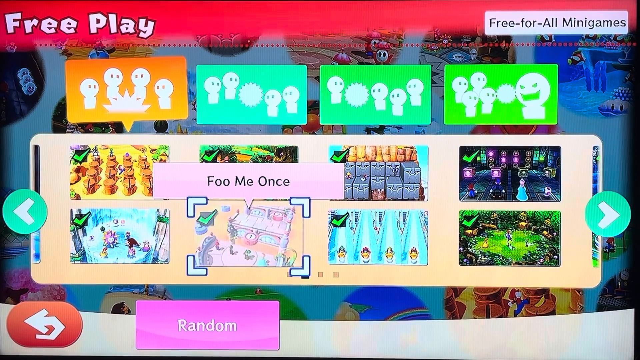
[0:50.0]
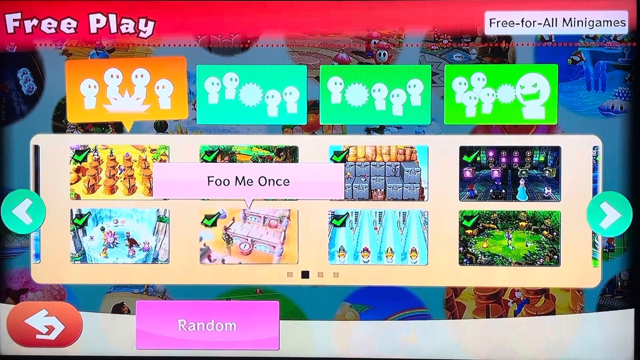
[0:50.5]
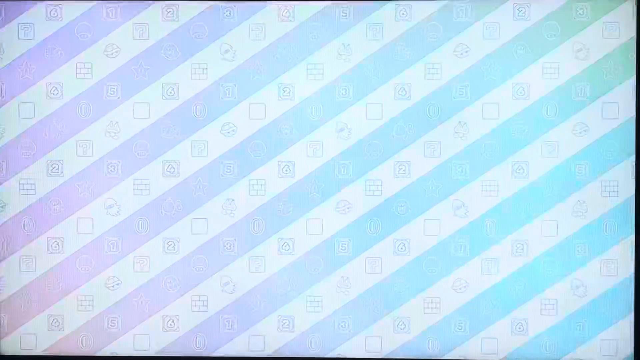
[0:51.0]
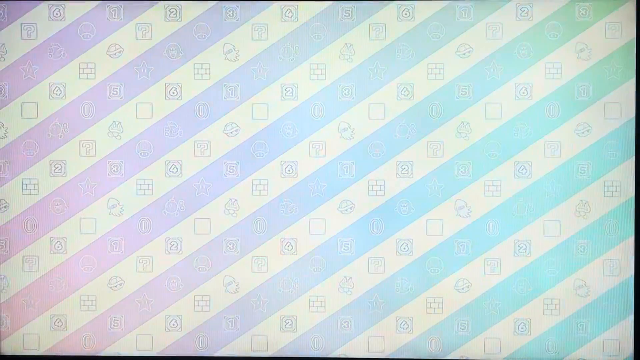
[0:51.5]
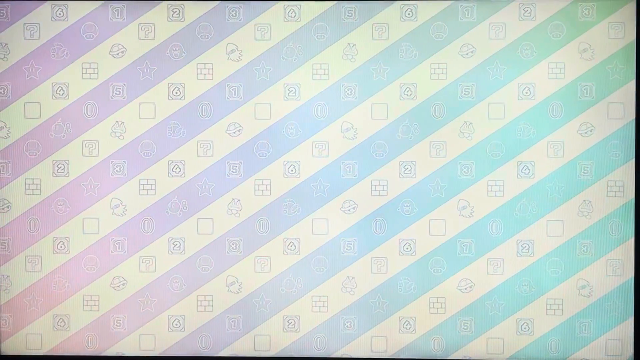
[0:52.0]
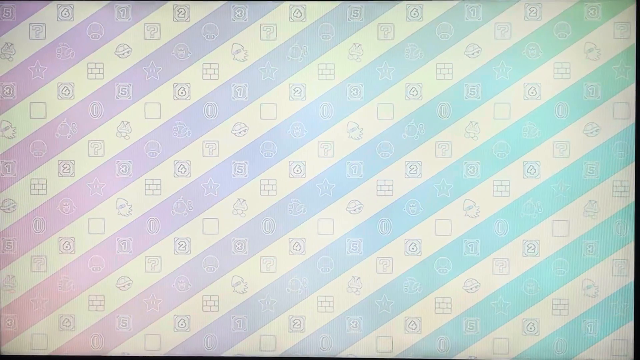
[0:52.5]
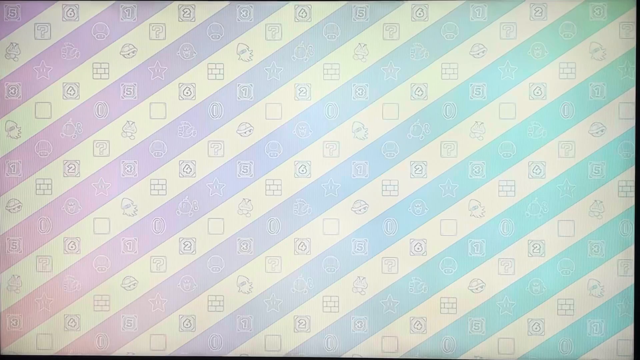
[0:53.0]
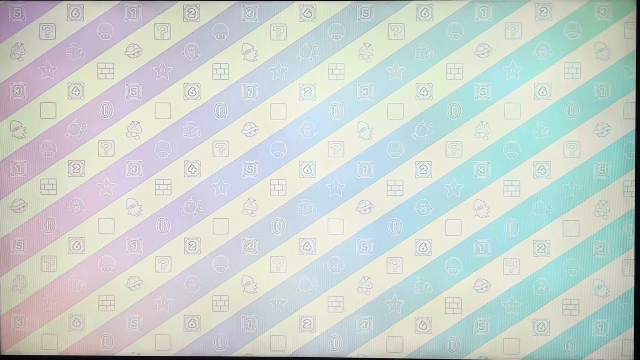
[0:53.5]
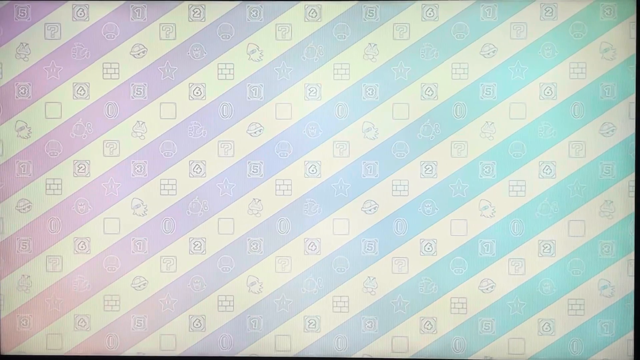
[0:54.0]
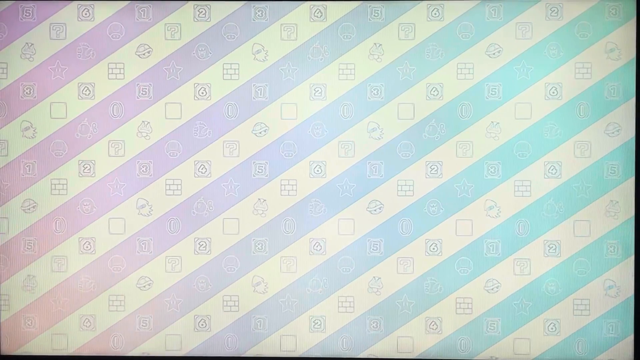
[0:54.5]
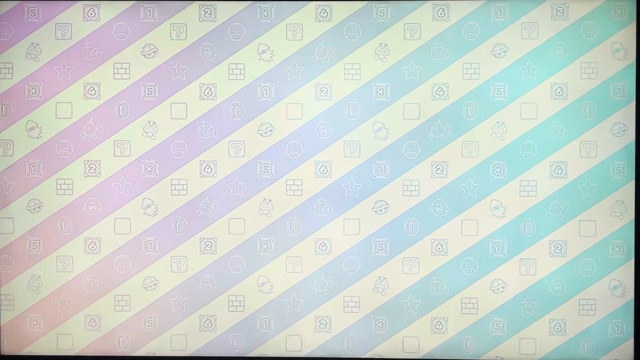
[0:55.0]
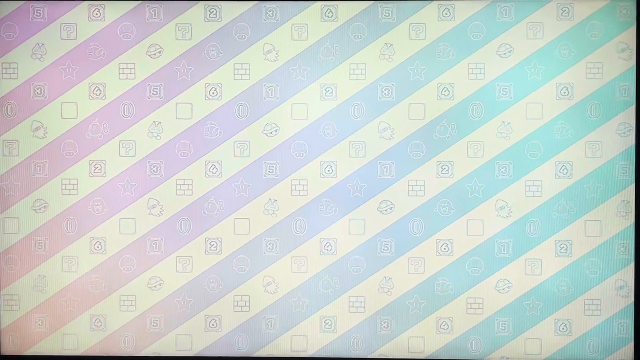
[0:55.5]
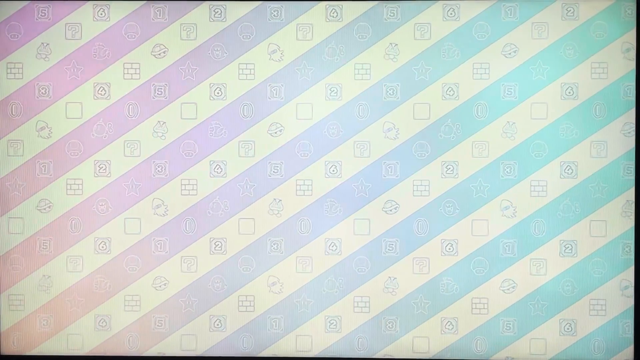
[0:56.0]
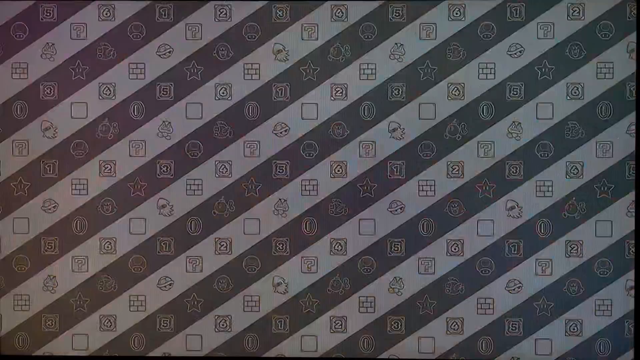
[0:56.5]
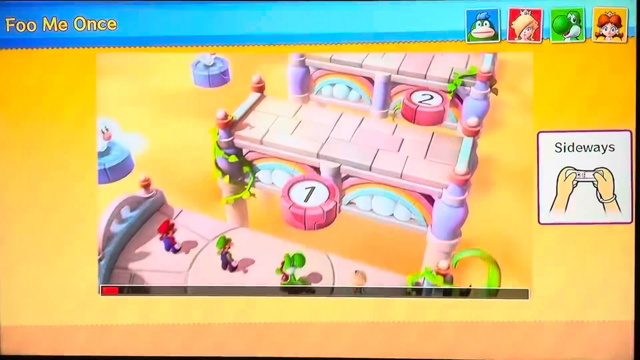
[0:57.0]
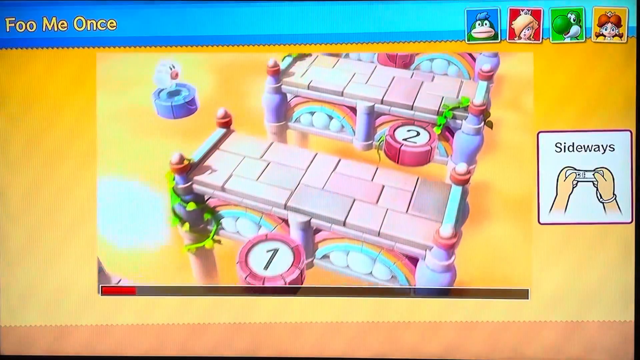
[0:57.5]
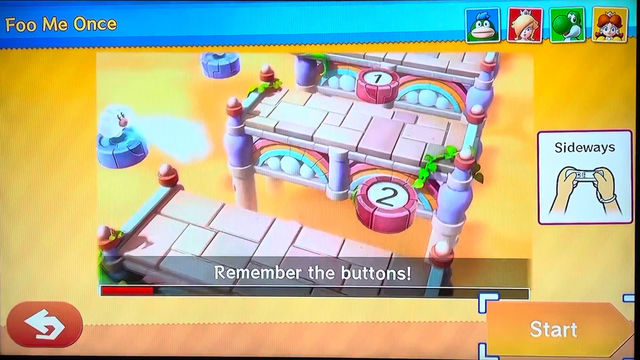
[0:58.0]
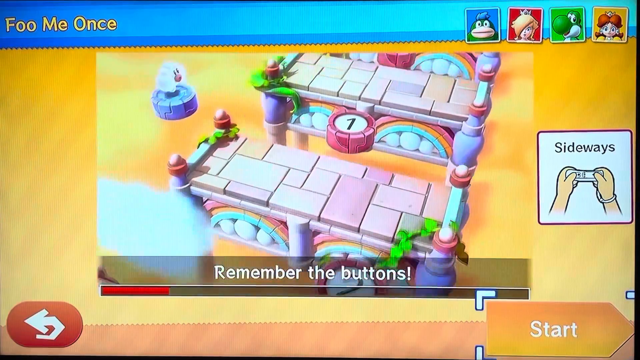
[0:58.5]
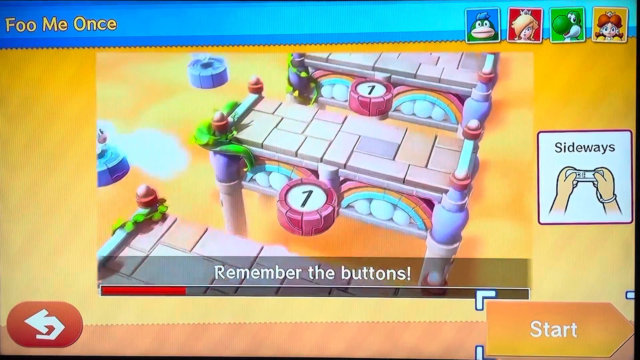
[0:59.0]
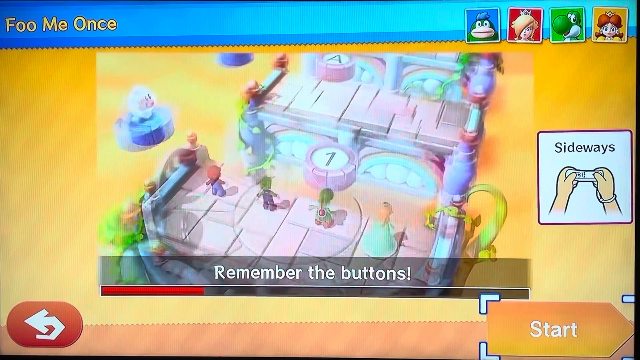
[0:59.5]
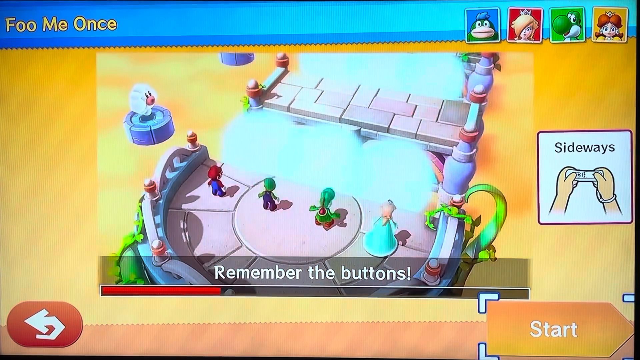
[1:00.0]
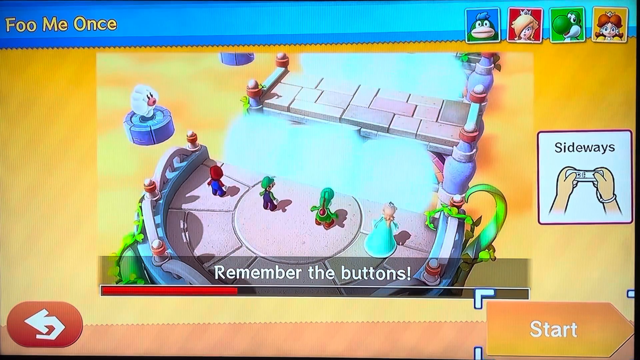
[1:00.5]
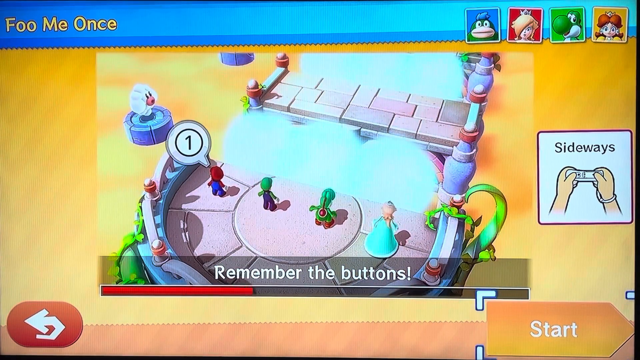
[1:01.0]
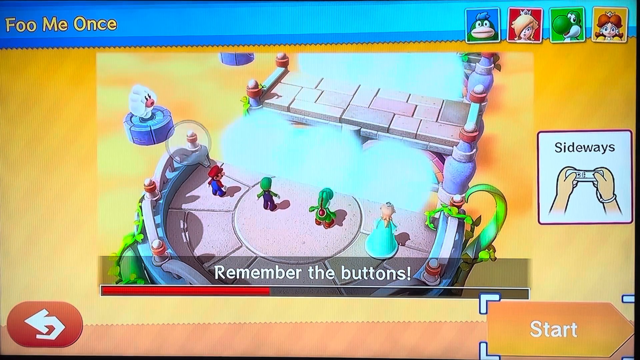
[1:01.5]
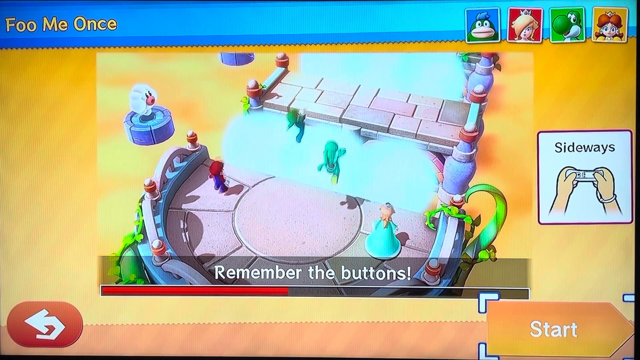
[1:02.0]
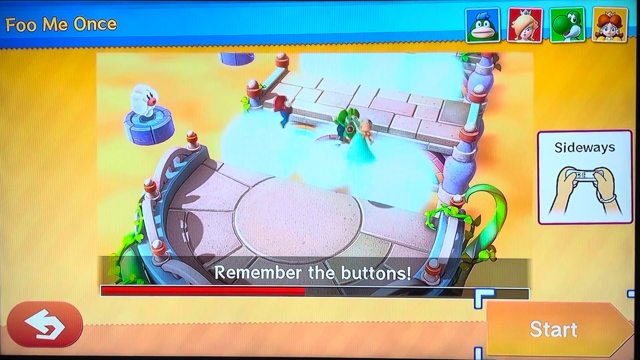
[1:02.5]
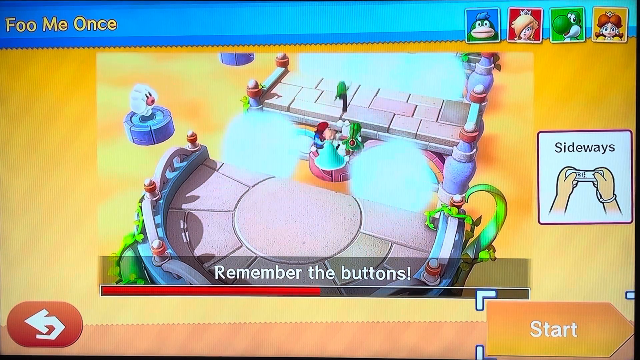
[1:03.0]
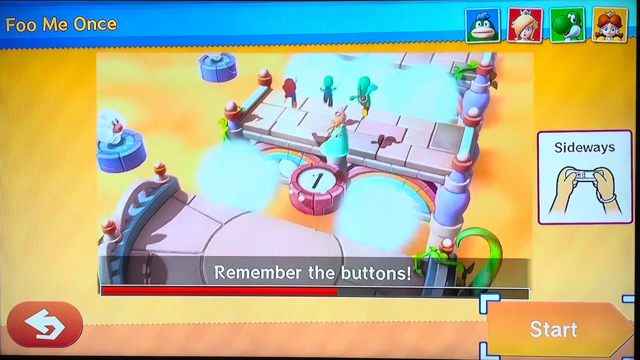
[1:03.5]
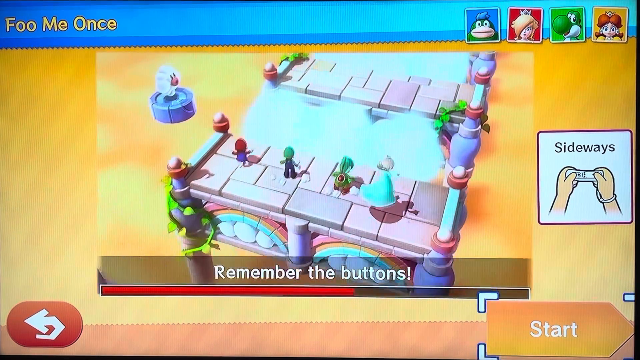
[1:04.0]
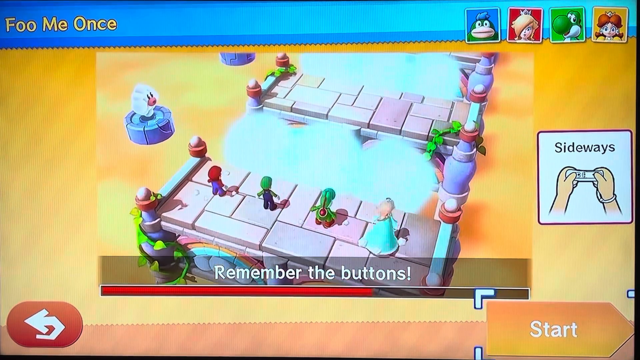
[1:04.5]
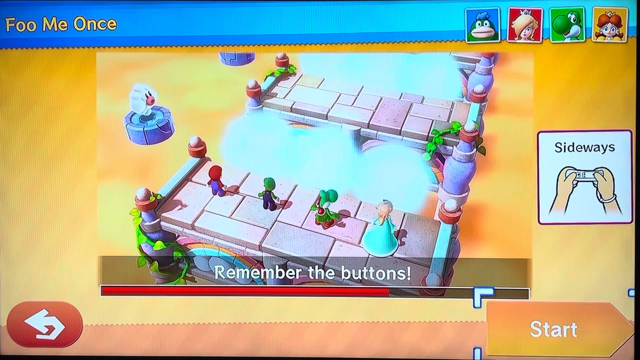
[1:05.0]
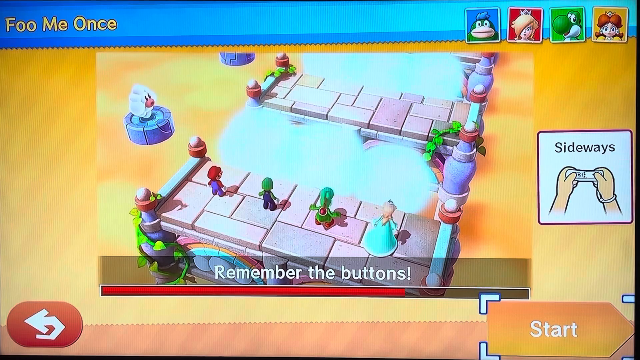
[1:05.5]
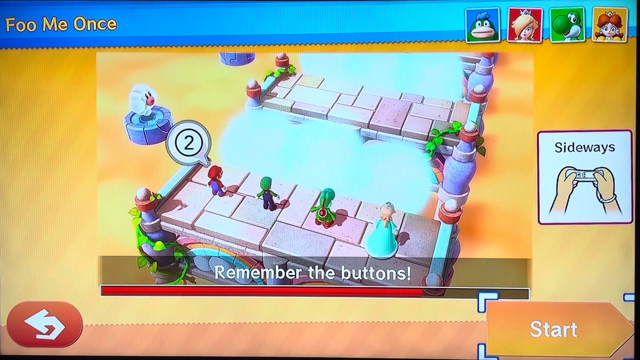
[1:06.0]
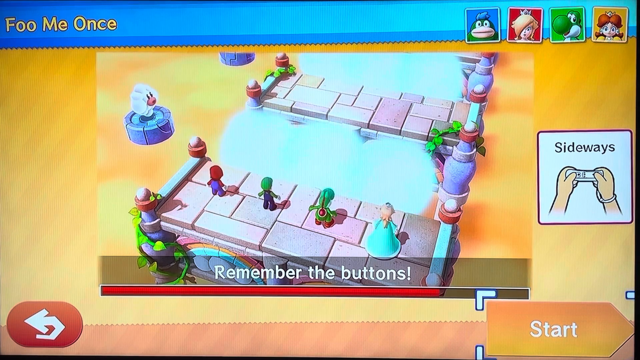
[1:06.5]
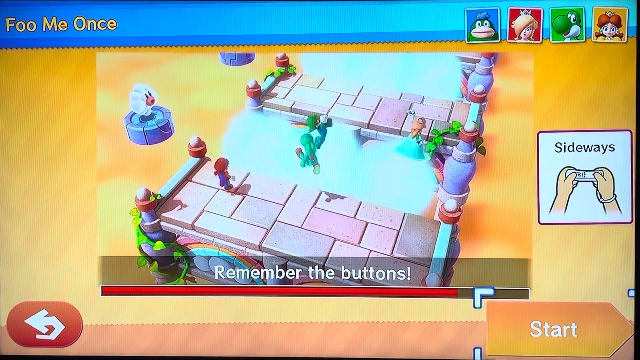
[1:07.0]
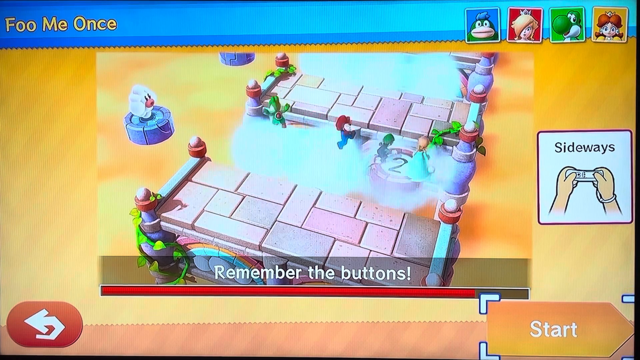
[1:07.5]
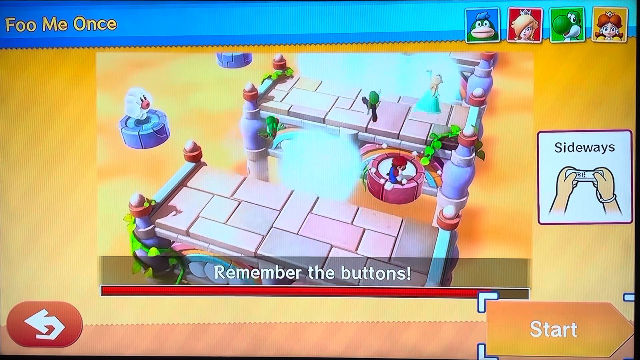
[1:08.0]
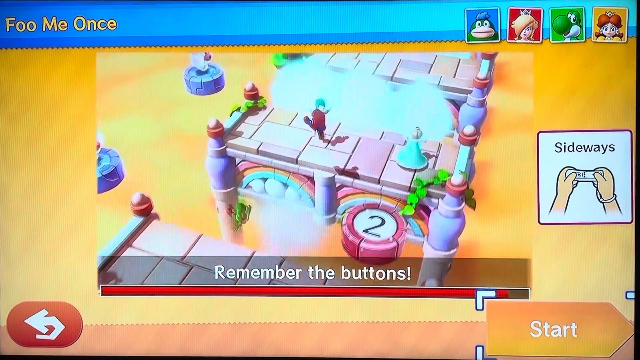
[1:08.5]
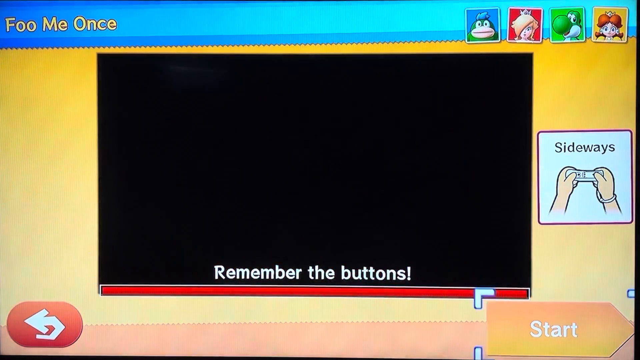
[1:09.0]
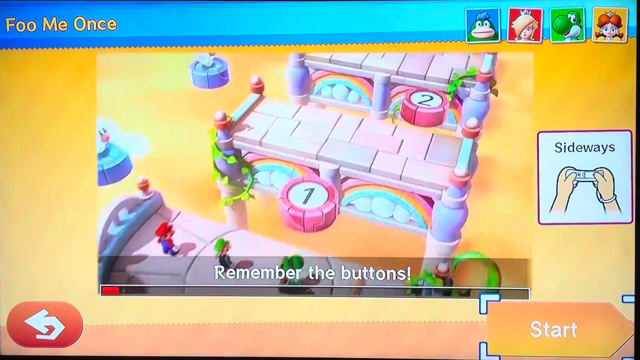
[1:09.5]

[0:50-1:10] The player picks a map called Fool Me Once, which has Peach-style elements on it, such as the tiles. The player jumps from platform to platform. Between the seen platforms there is a platform hidden by clouds, so the player jumps into something unknown without knowing where the platform right in front of them is. It appears to be a memorization game about finding and remembering where the platforms are.